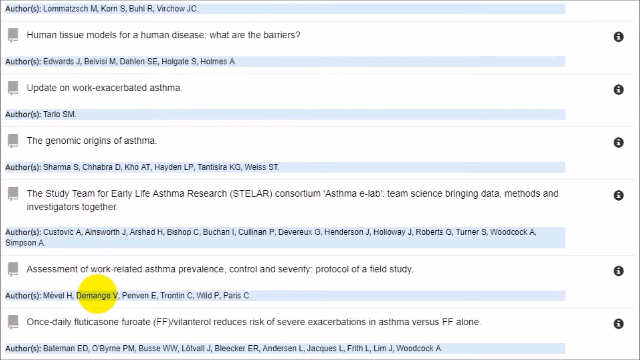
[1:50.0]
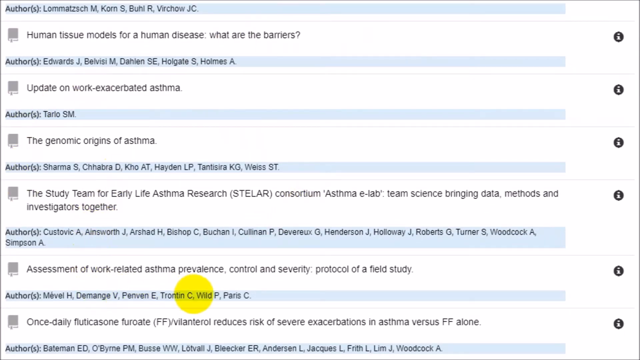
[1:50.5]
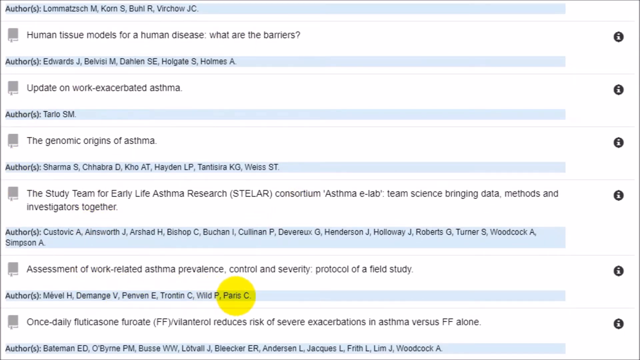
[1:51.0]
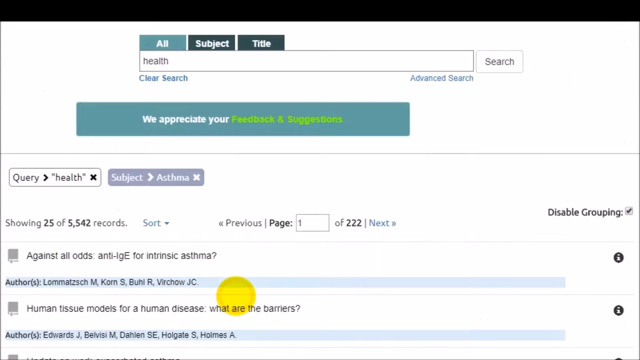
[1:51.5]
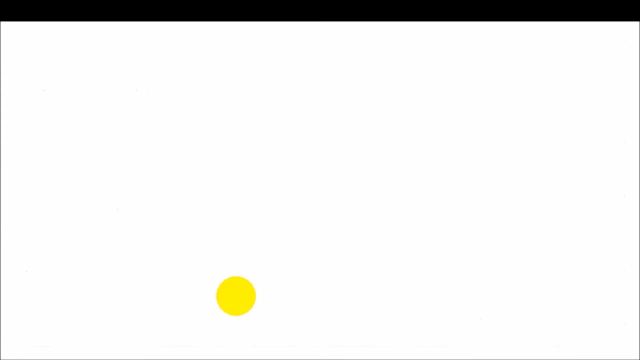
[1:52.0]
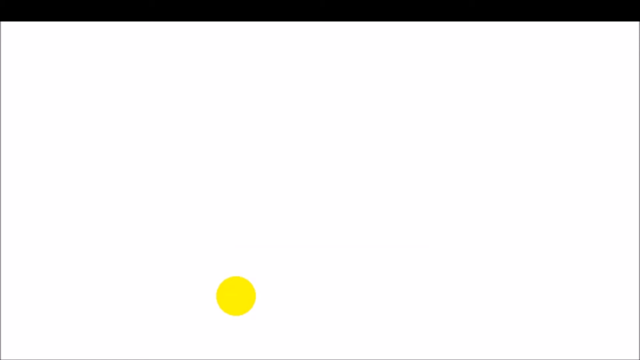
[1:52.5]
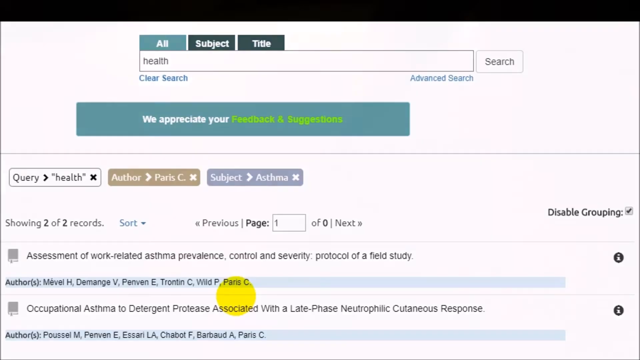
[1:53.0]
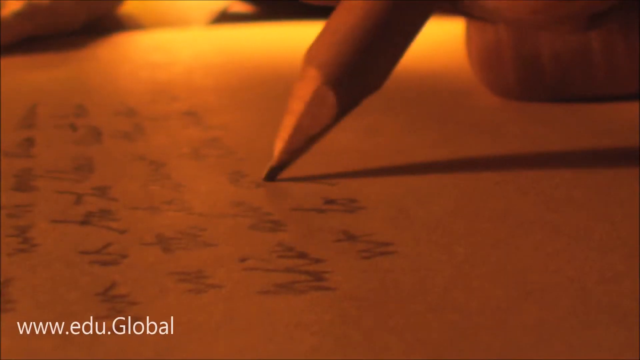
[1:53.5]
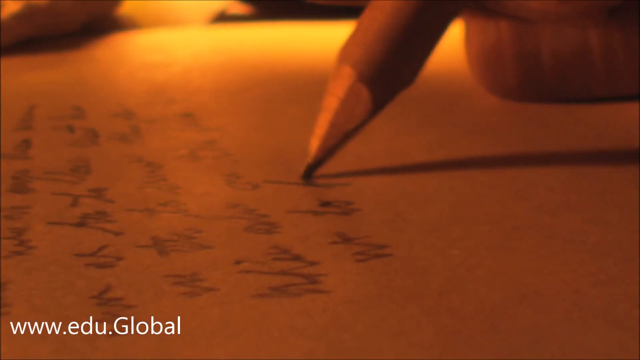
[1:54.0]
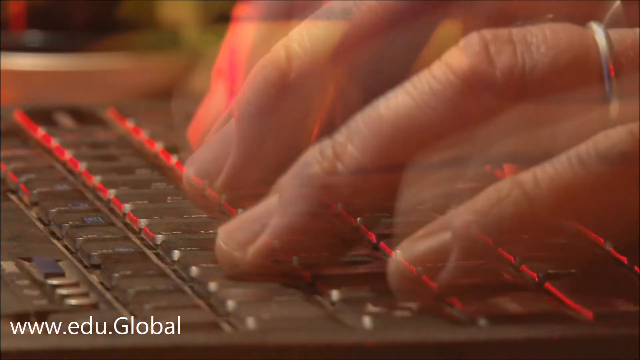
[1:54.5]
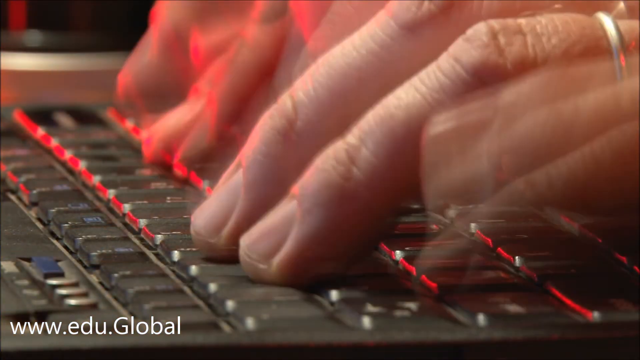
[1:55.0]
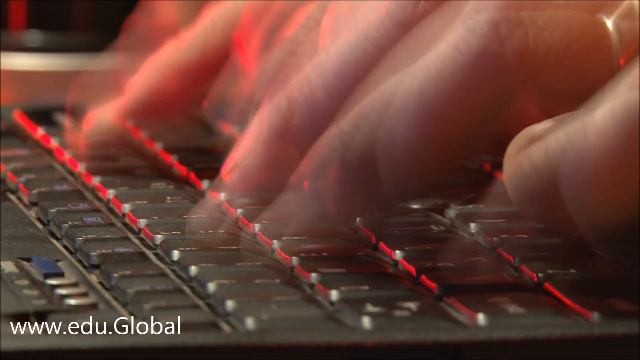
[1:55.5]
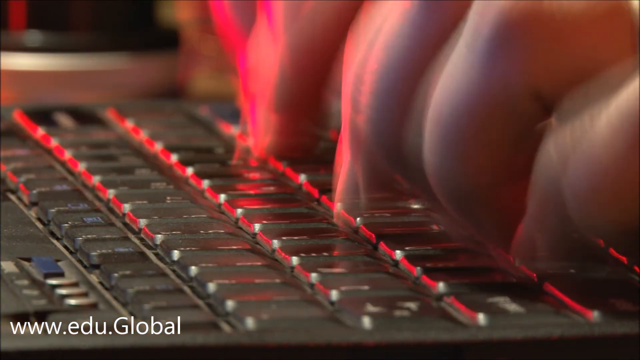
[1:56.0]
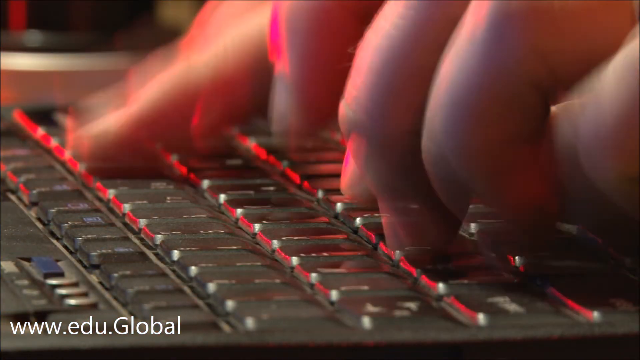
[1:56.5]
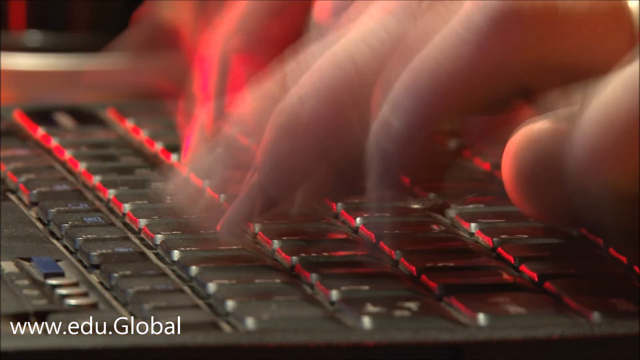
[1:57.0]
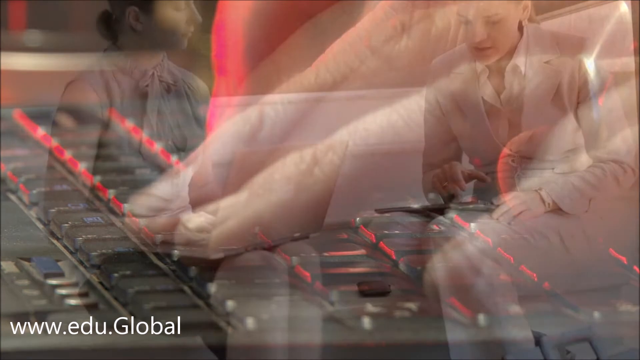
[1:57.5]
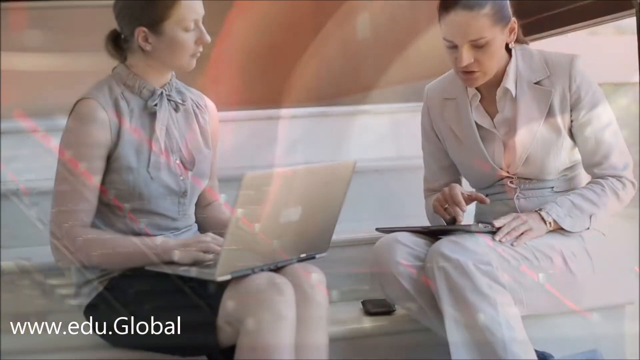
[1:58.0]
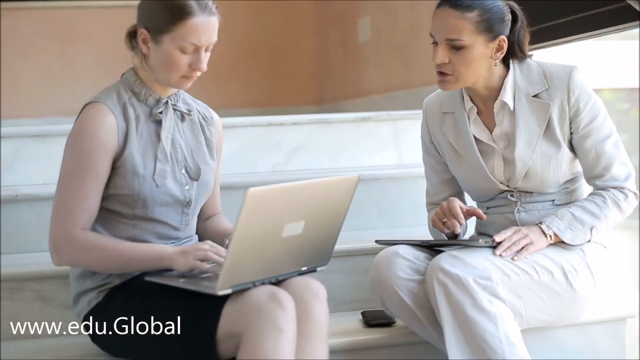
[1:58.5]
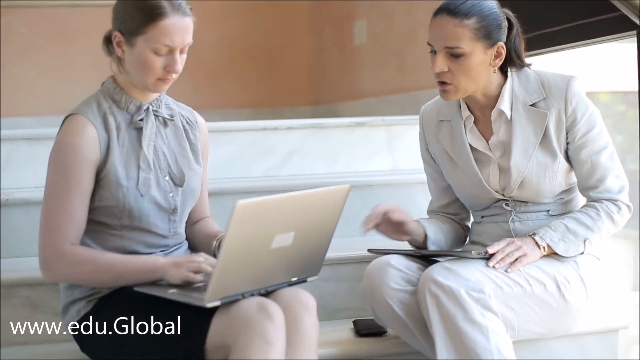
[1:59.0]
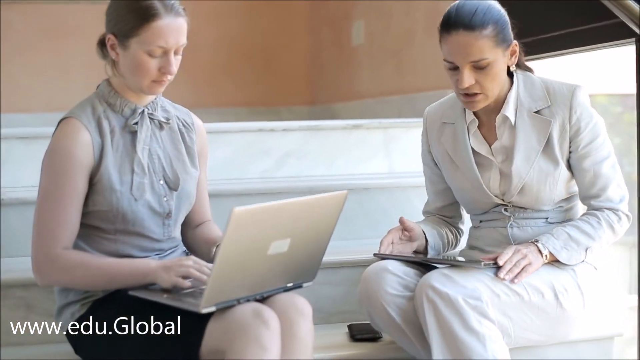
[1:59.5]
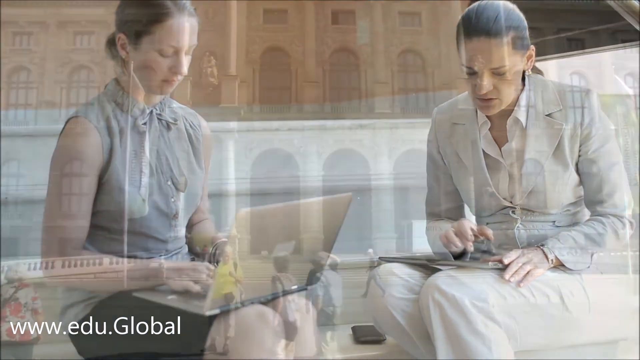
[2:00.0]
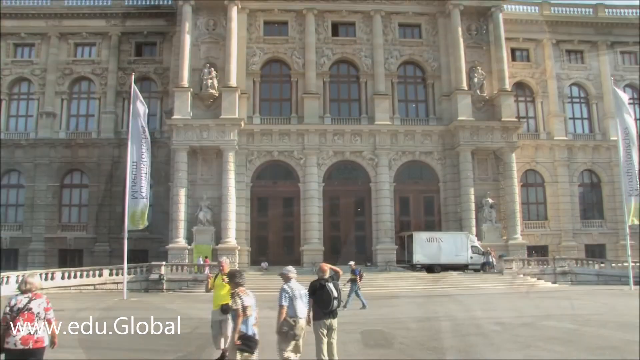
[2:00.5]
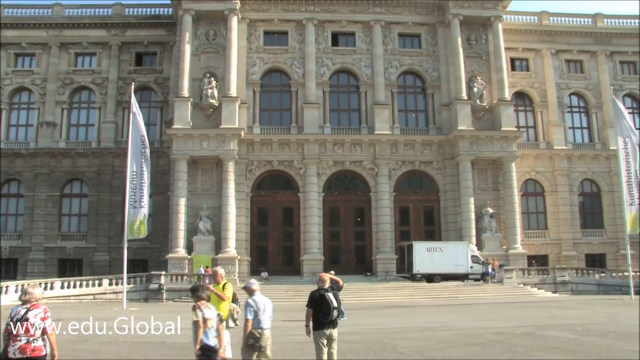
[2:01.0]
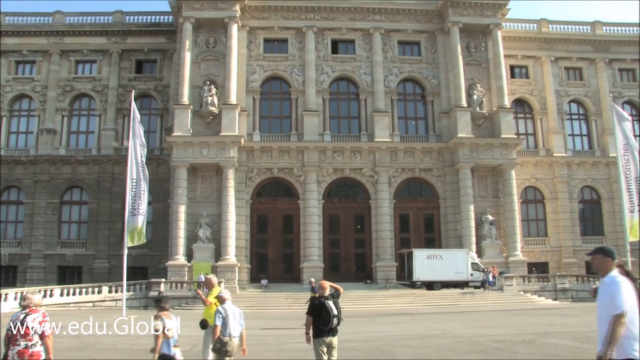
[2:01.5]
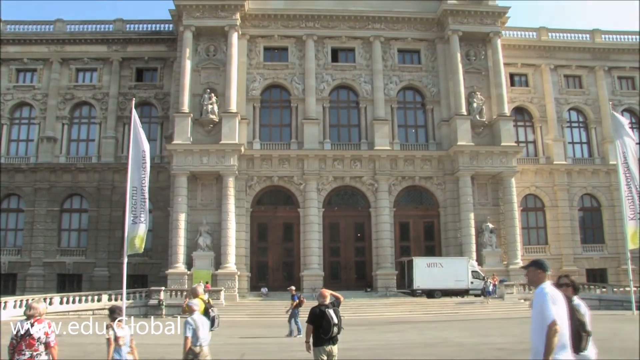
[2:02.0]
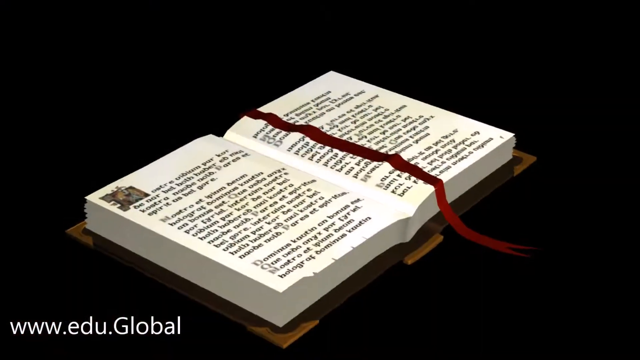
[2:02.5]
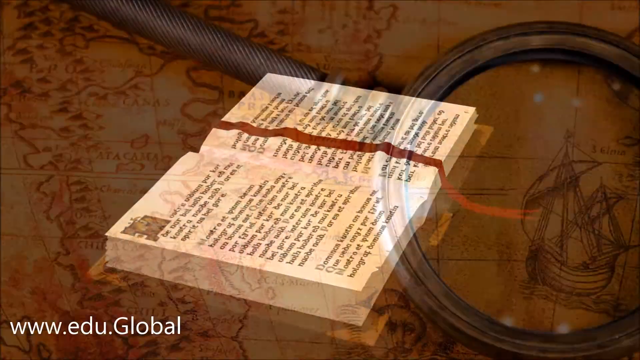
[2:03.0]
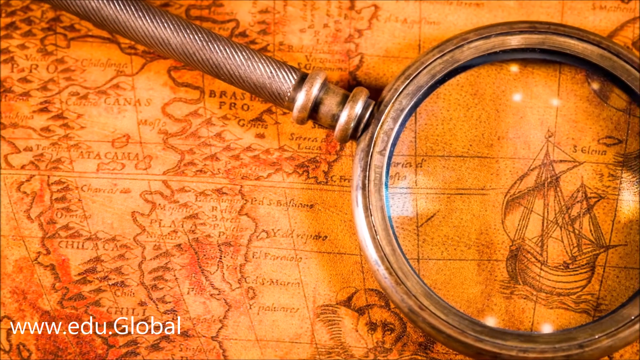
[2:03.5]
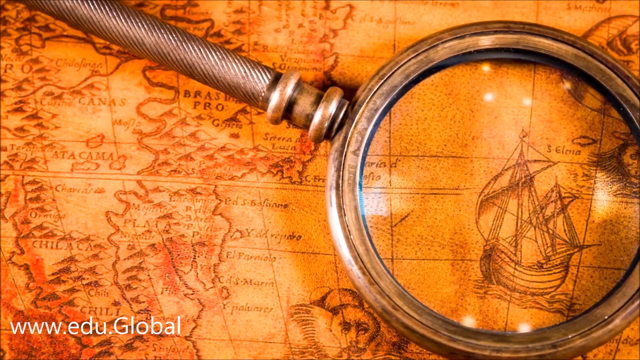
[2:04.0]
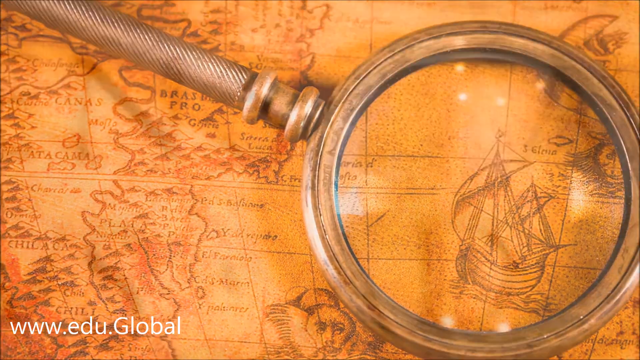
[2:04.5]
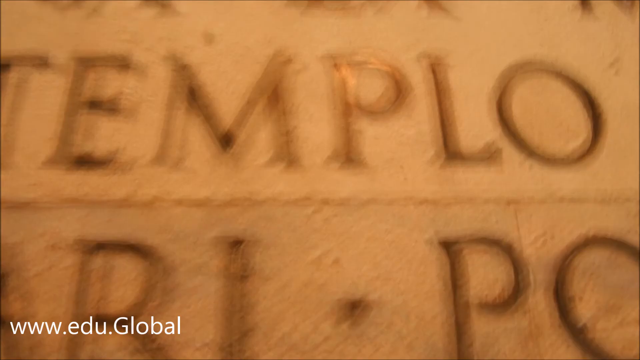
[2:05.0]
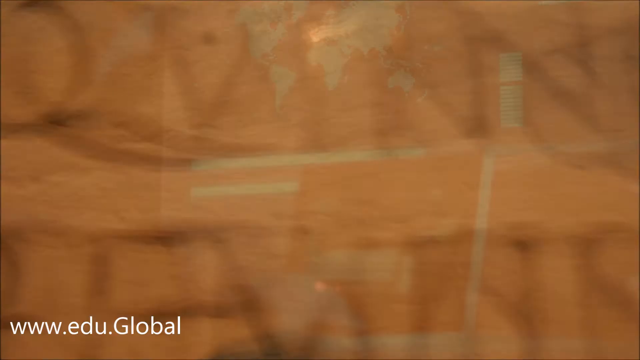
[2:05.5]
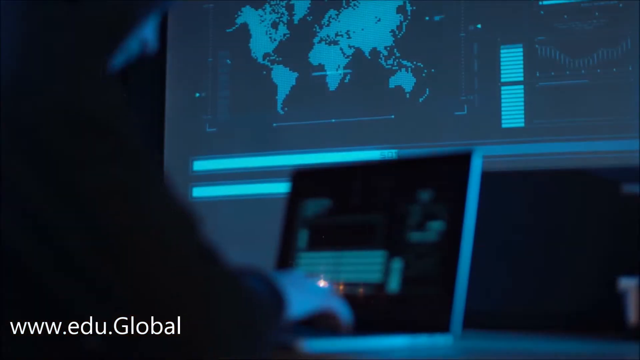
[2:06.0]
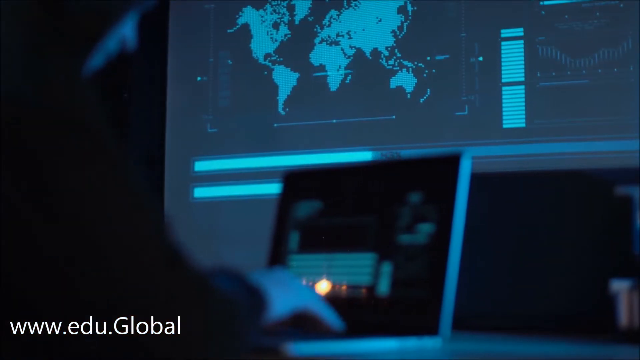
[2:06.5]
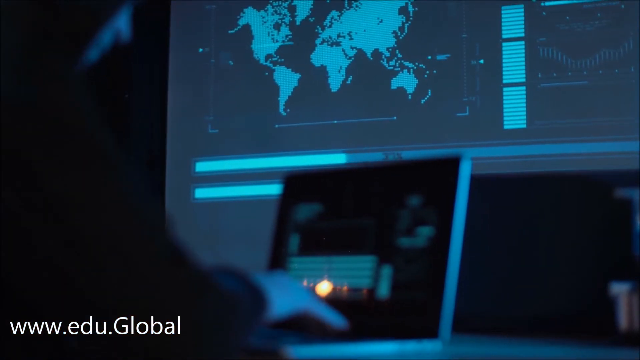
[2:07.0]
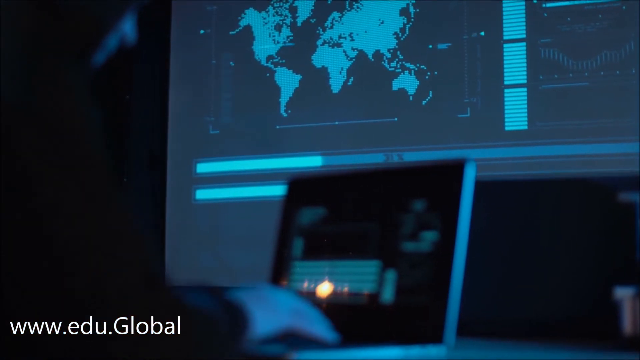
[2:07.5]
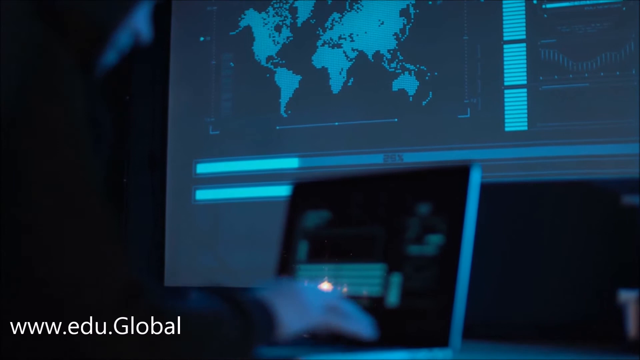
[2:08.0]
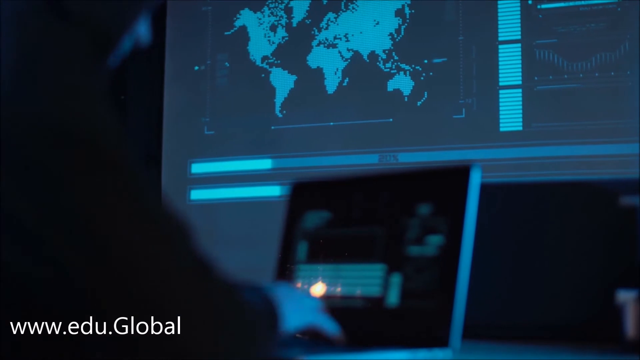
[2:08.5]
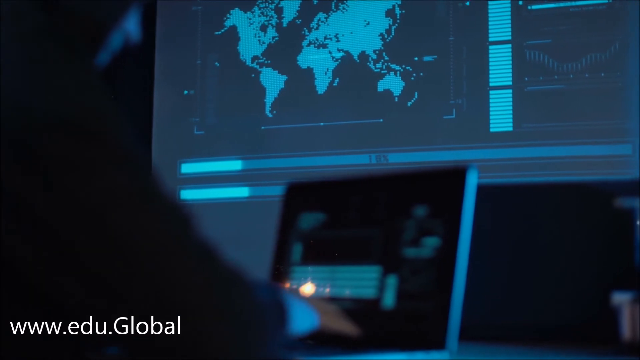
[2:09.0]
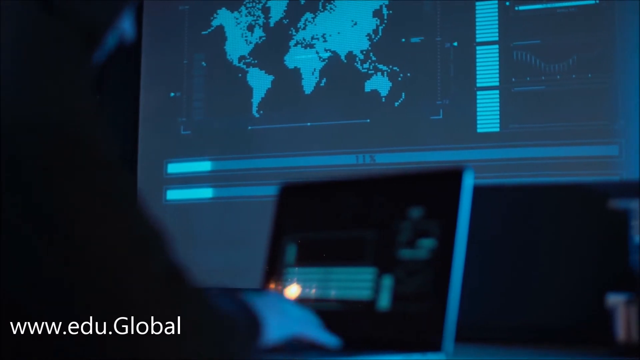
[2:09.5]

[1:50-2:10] The user is on the list of search results, with the cursor over one result, and clicks the names of its authors or collaborators. Just as it opens, the scene transitions to a short film showing a close-up of a pencil writing on paper in what looks like cursive, with a reddish or yellowish tone. Next, fingers type on a laptop or keyboard. Two ladies sit on marble stairs; the one on the left has a laptop between her legs and the other has a tablet on her legs. An exterior image follows, possibly of the bookstore from the street, huge and very elegant with many details on each column, and a flag on the left that cannot be made out because there is no wind. Finally a scene in a blue room appears and is cut abruptly.